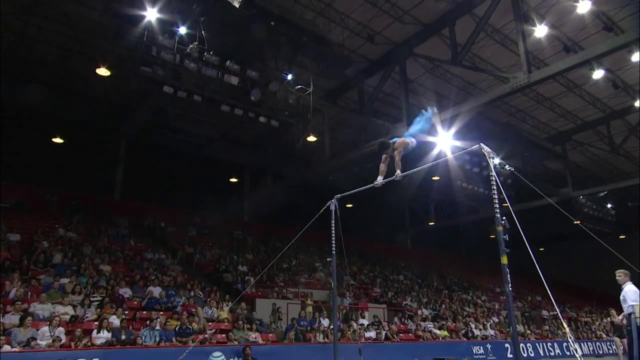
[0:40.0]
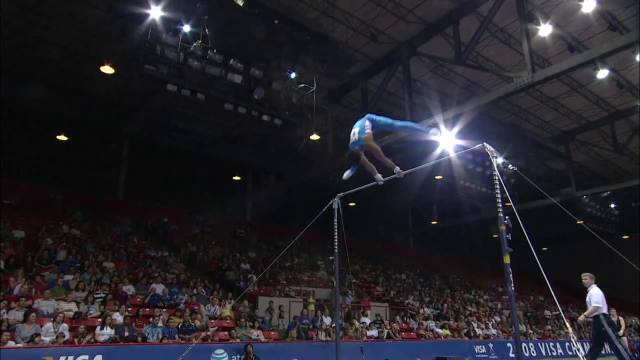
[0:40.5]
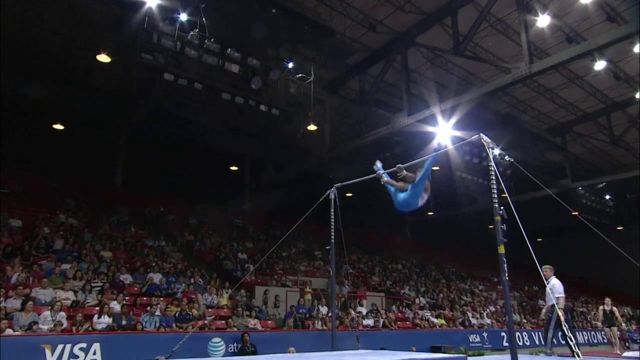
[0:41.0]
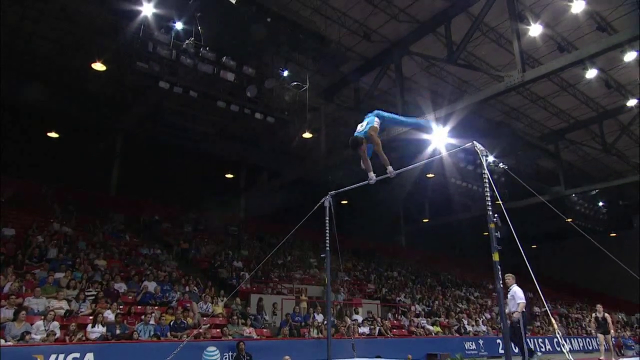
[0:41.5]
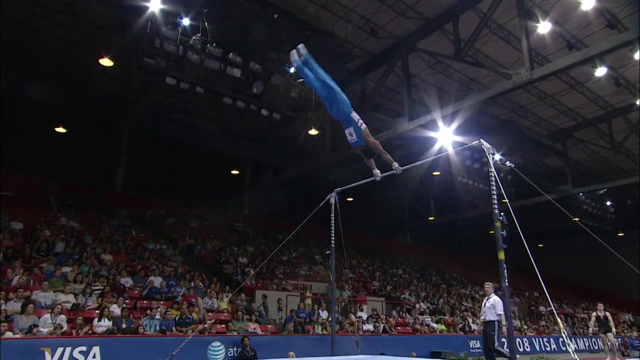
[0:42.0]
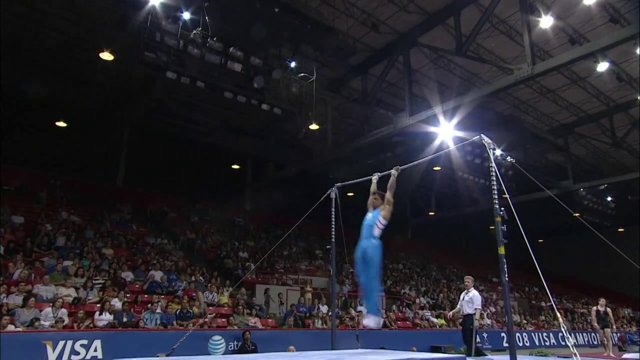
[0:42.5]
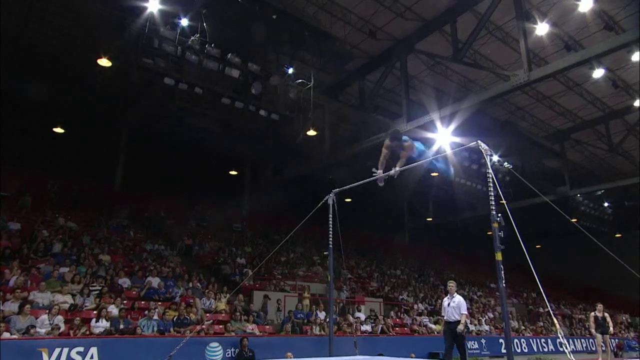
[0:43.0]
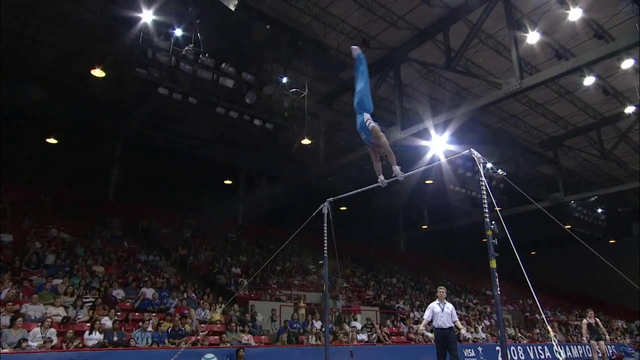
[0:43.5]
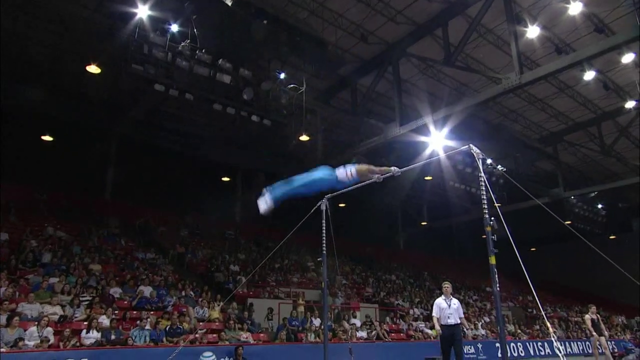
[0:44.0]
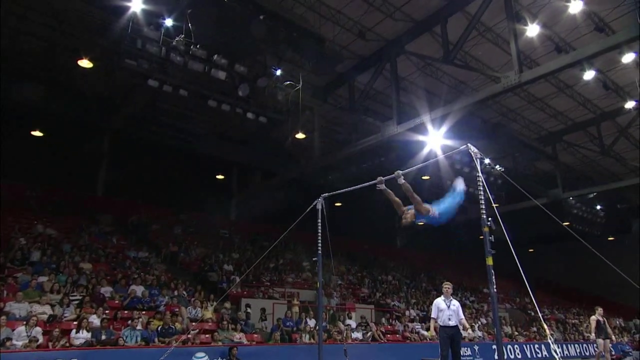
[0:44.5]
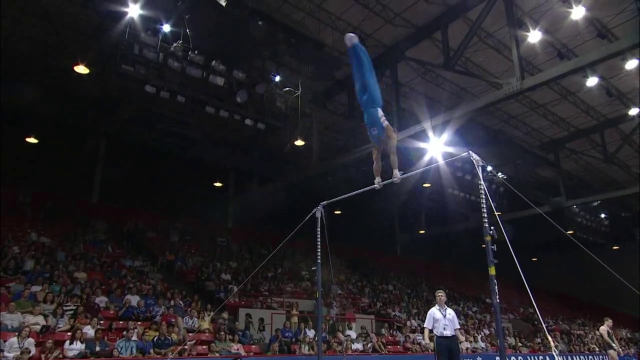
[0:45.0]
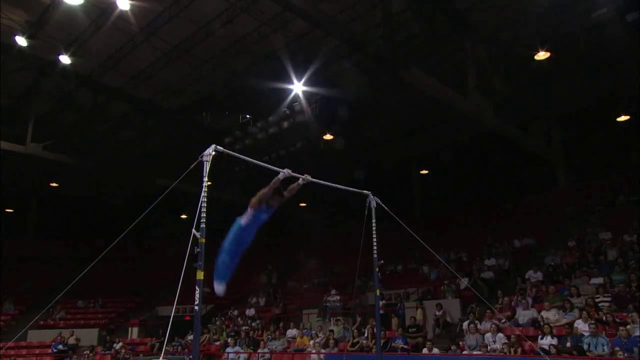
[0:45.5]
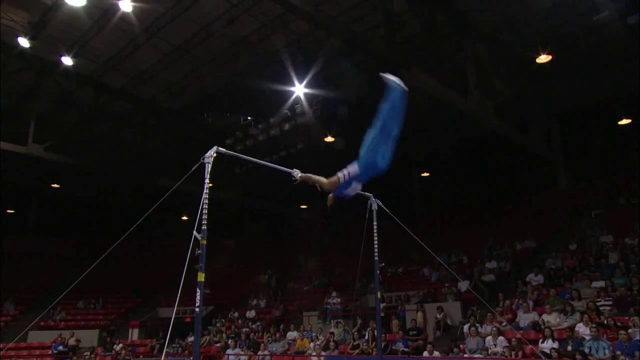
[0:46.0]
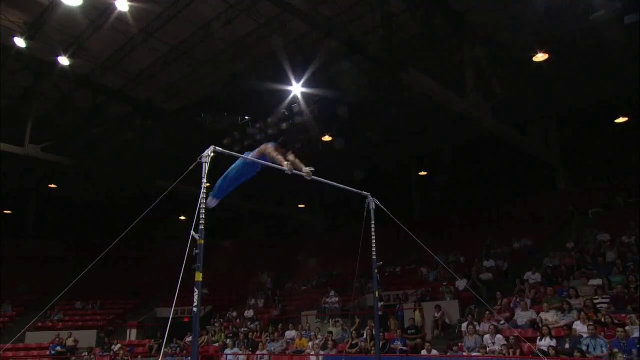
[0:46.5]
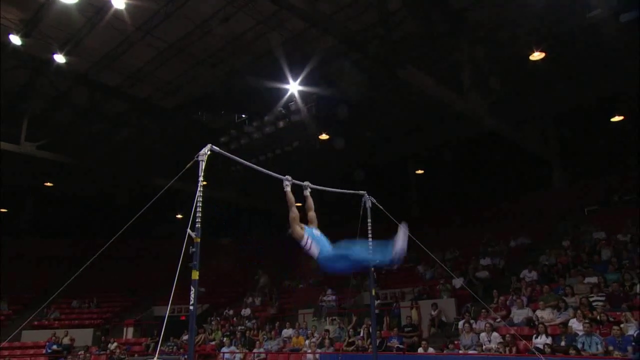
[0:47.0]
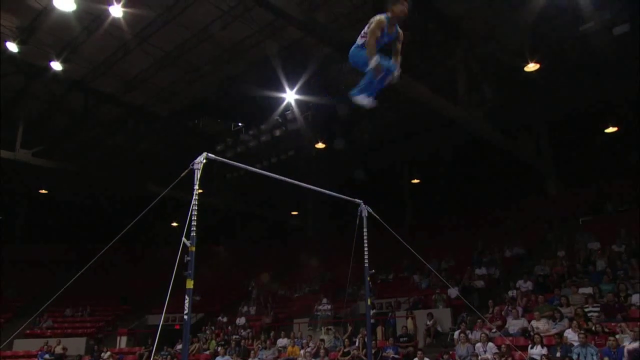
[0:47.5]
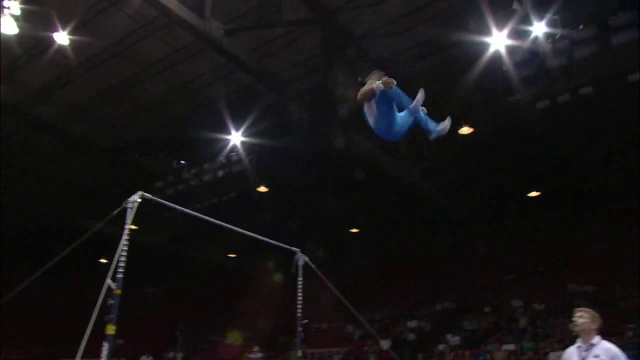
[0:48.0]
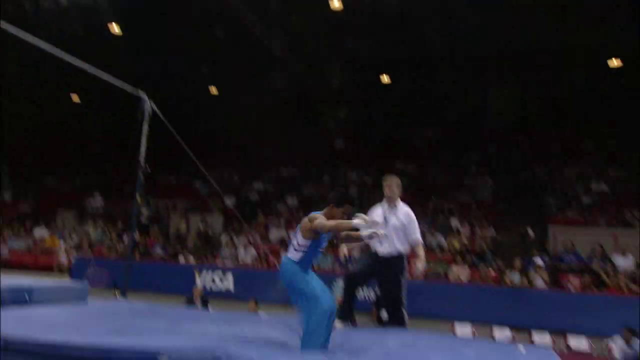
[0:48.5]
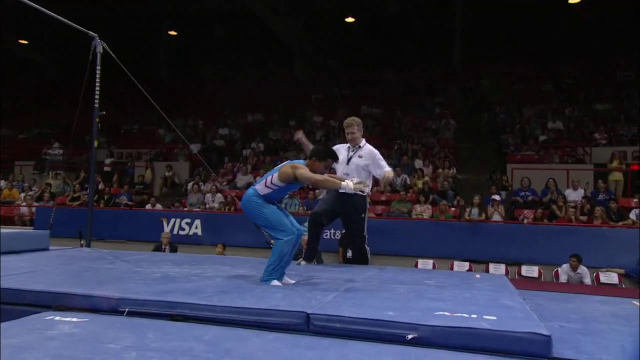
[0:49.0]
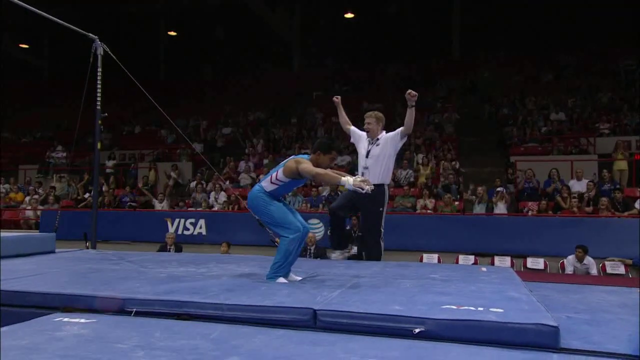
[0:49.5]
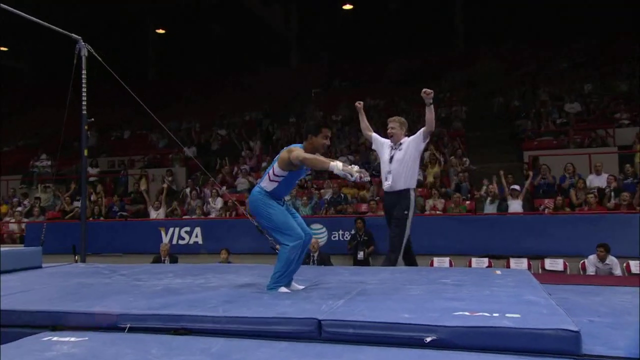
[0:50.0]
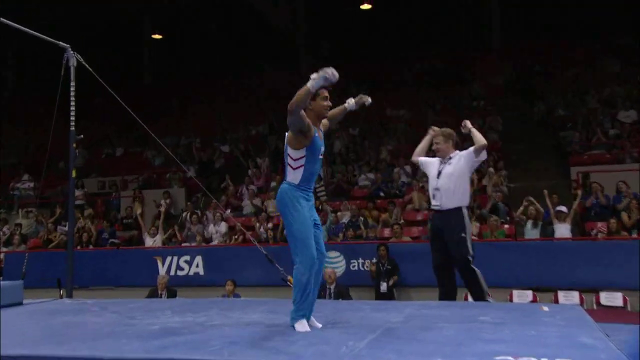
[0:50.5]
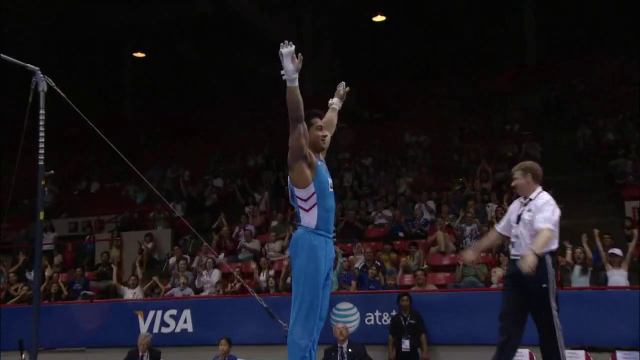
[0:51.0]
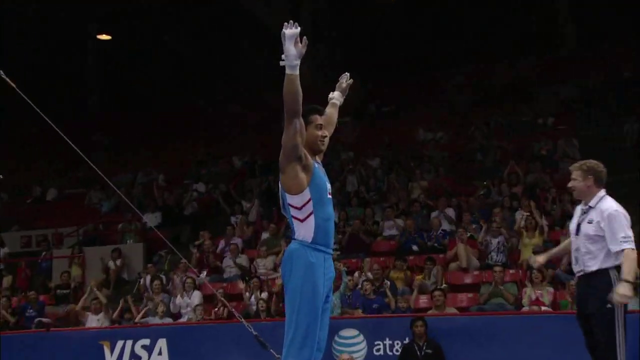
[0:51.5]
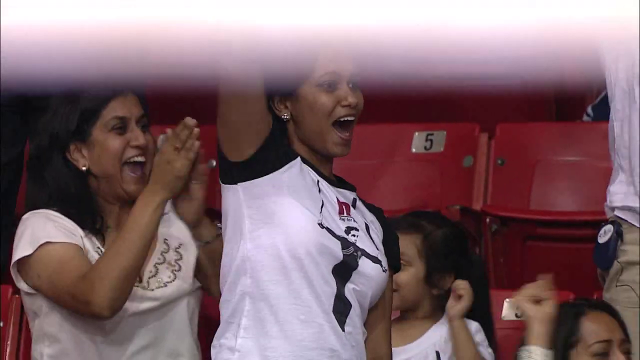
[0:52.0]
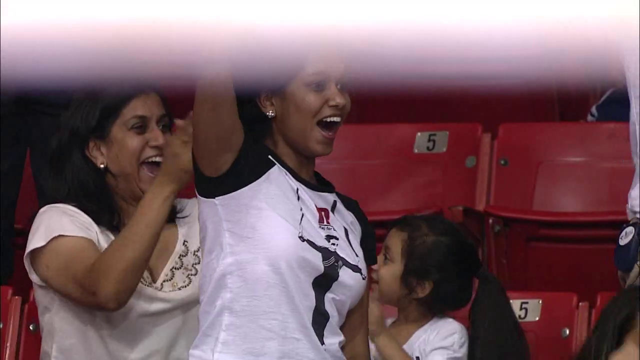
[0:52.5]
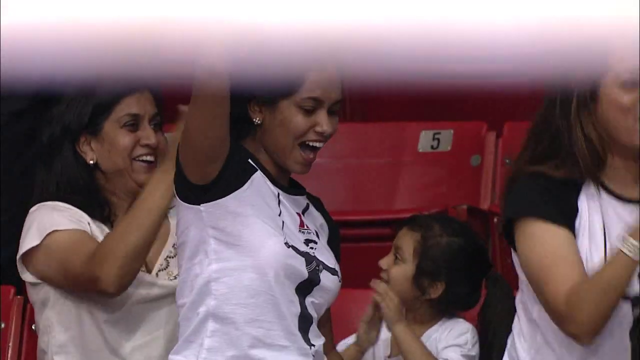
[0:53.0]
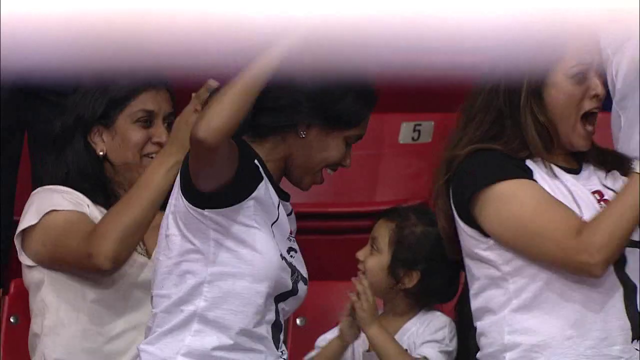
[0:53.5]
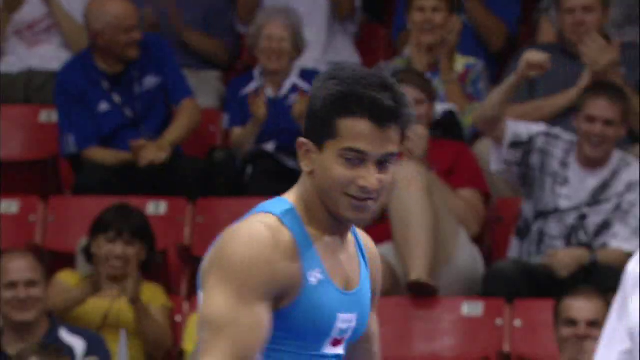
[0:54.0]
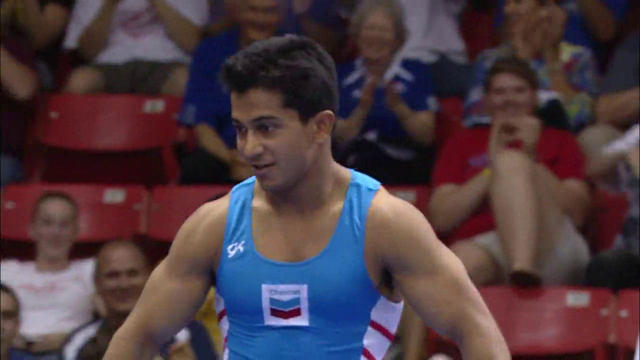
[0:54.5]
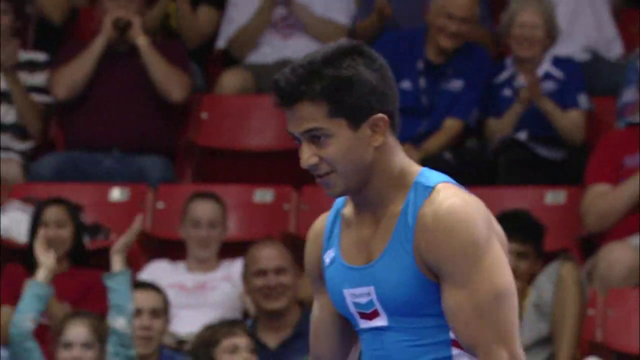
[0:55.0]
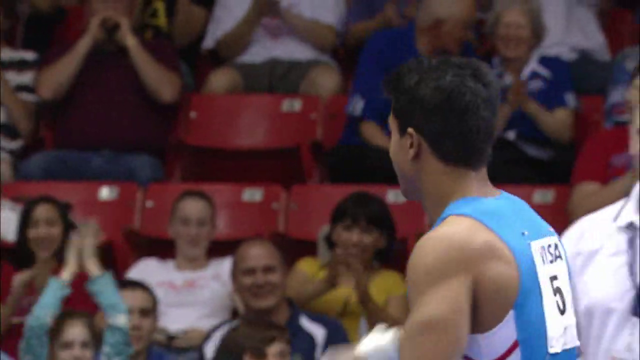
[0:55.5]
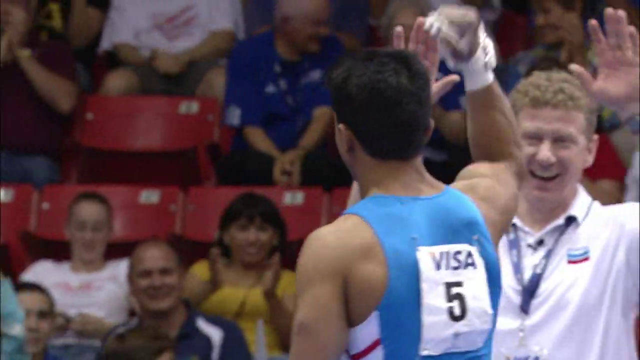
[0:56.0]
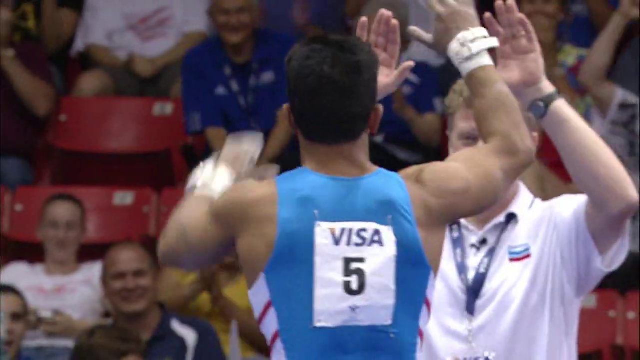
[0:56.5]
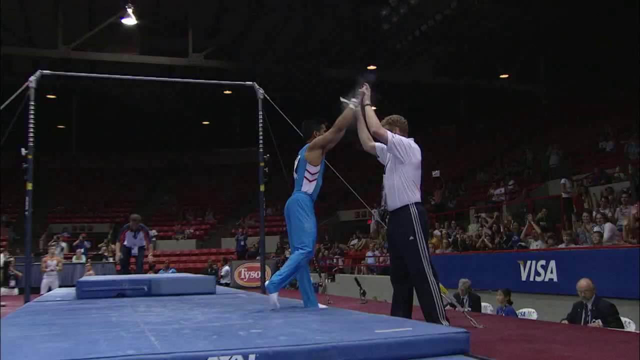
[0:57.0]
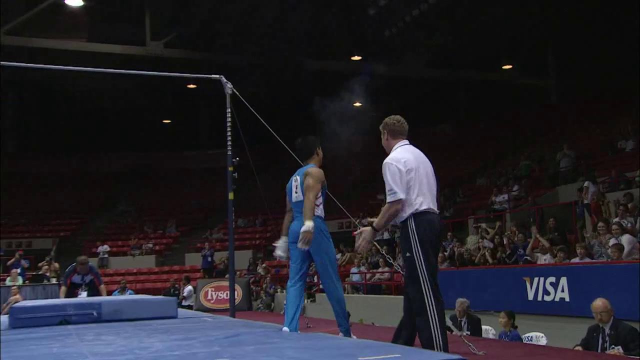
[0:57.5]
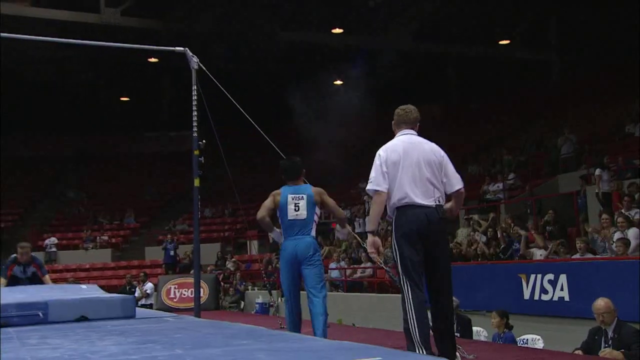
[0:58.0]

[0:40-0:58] The male gymnast spins, puts his legs down near his head and keeps spinning. He spins really fast, then goes high into the air, spinning and flipping away from the bar. As he spins he grabs his legs, drops, and sticks the landing, putting his arms up in the air while the whole crowd goes wild. The number on his back is five, and the word "VISA" is on his back in all capital letters. The coach, or the person who helped him get up on the uneven bars, gives him a big high-five, and he is smiling. His family in the audience cheers and screams; they are all women, including a little girl.